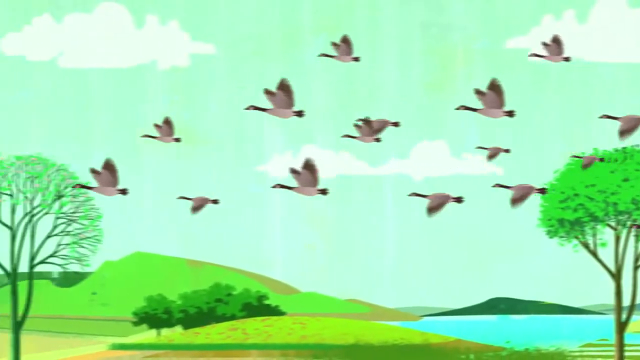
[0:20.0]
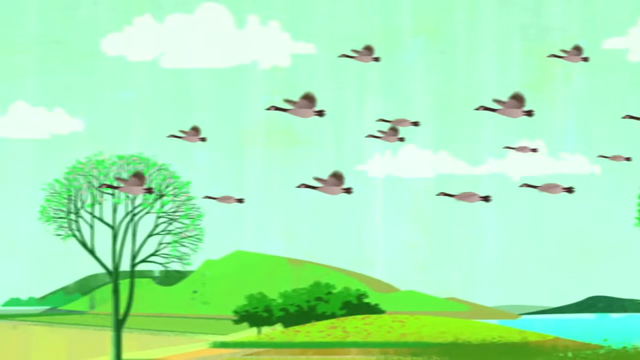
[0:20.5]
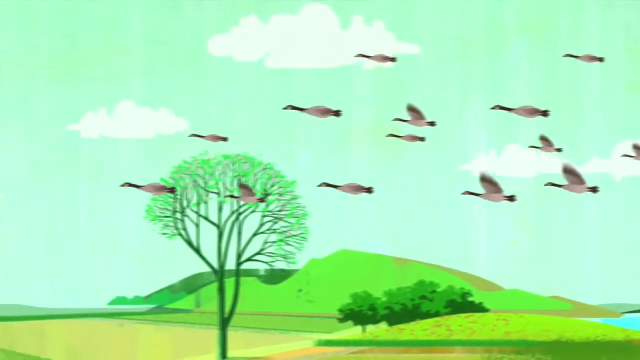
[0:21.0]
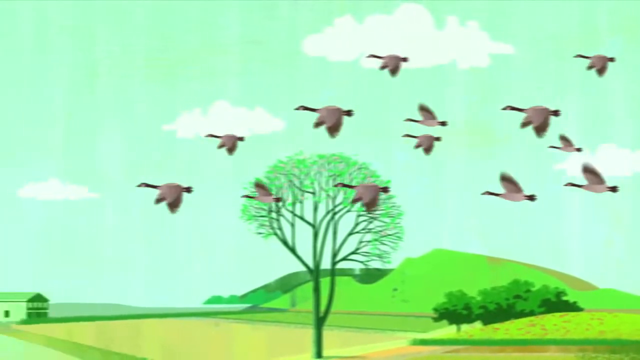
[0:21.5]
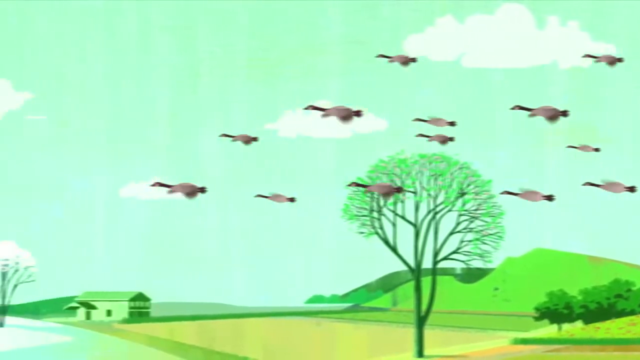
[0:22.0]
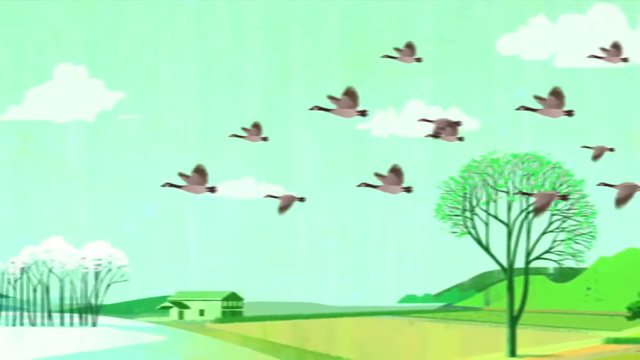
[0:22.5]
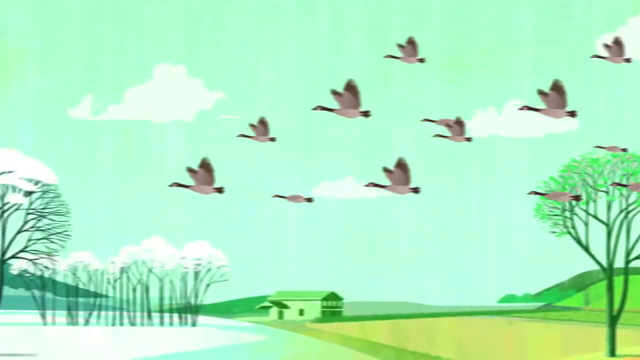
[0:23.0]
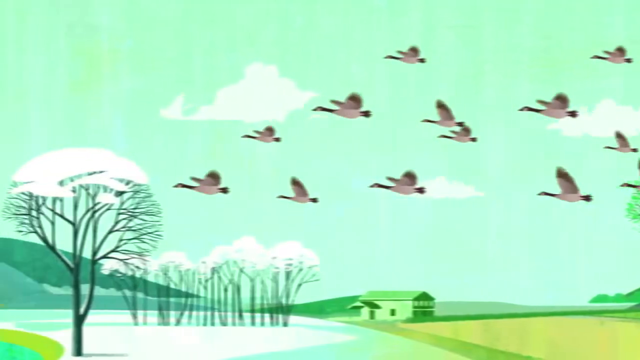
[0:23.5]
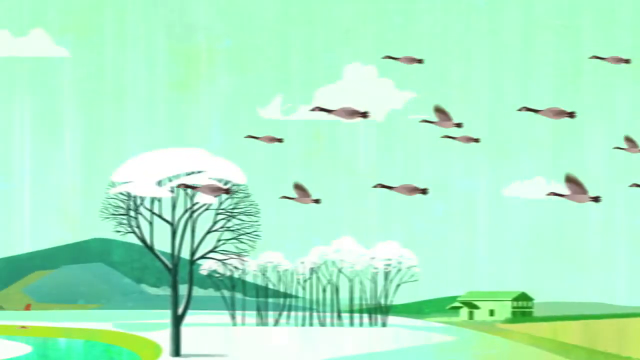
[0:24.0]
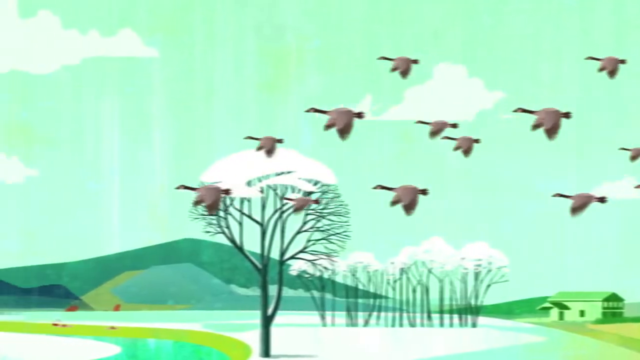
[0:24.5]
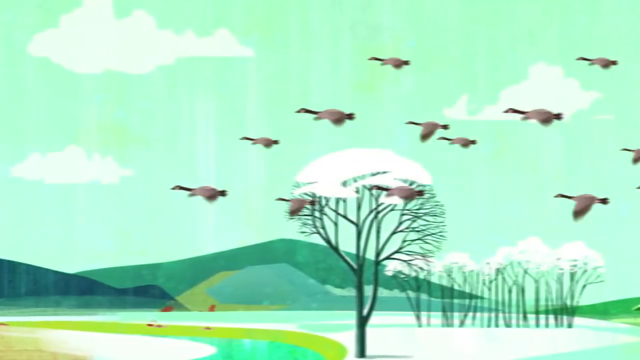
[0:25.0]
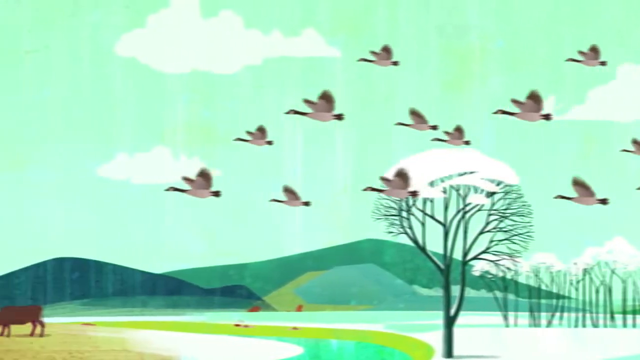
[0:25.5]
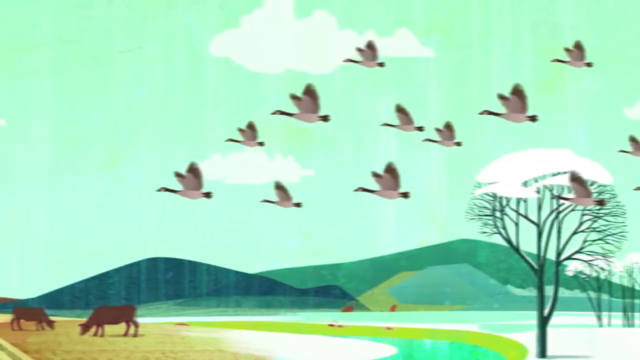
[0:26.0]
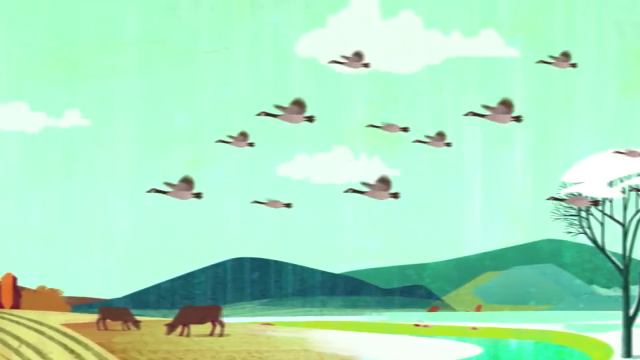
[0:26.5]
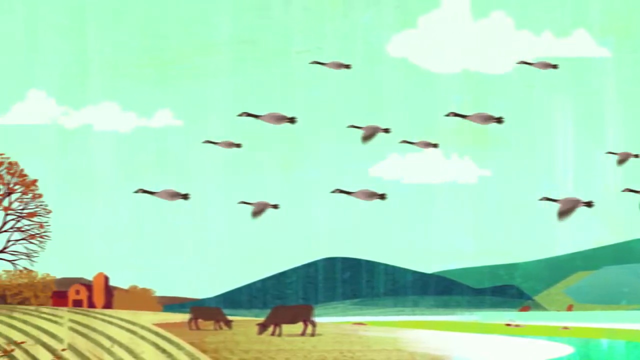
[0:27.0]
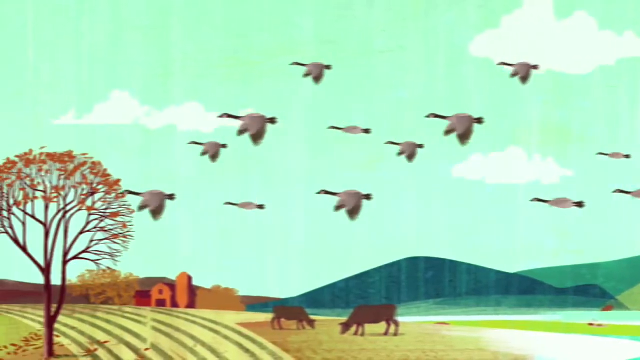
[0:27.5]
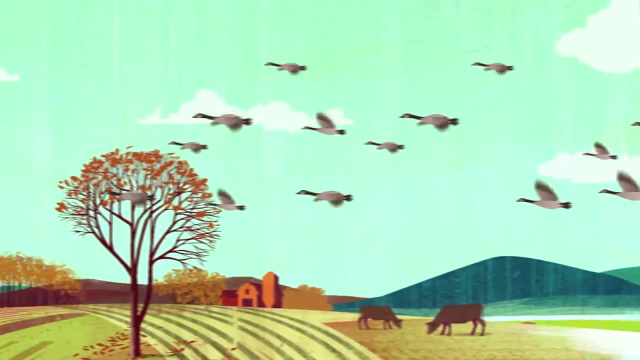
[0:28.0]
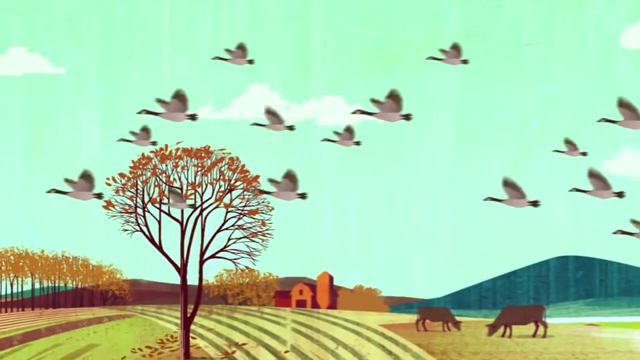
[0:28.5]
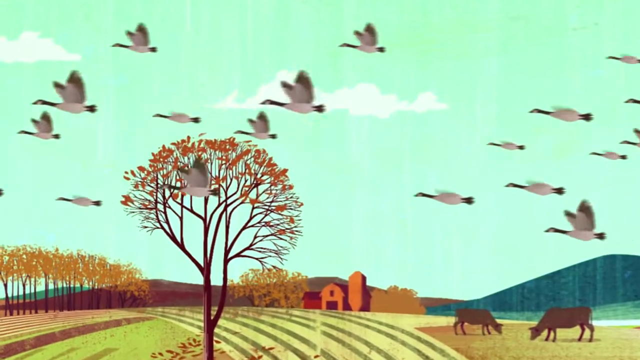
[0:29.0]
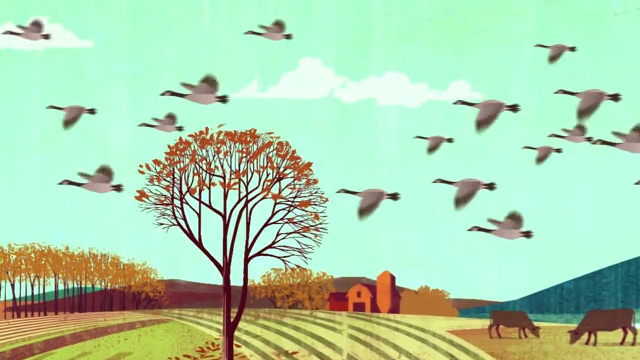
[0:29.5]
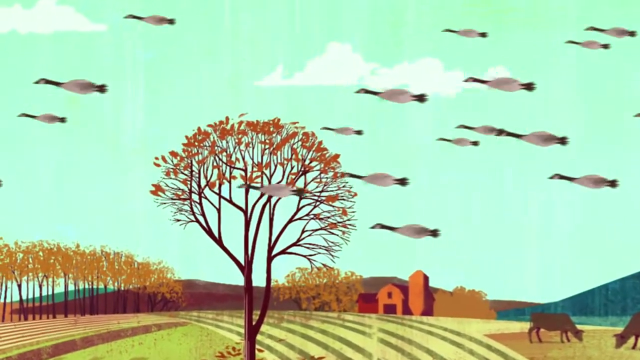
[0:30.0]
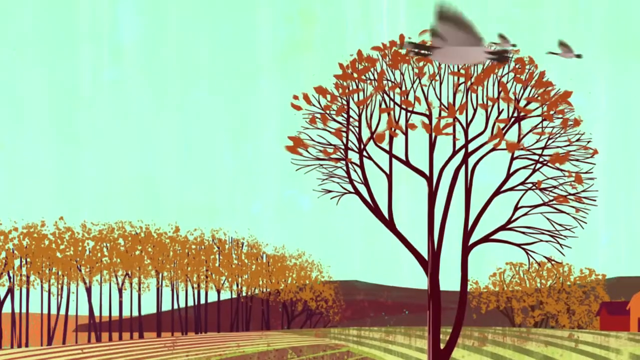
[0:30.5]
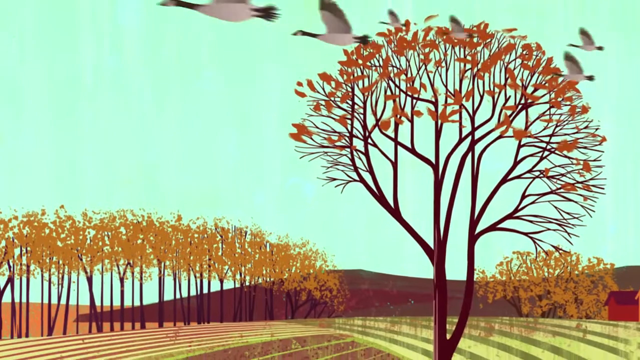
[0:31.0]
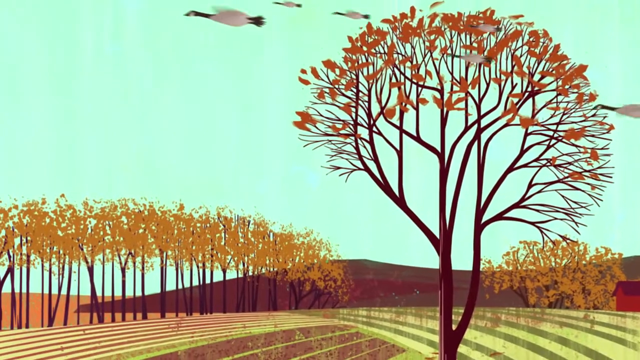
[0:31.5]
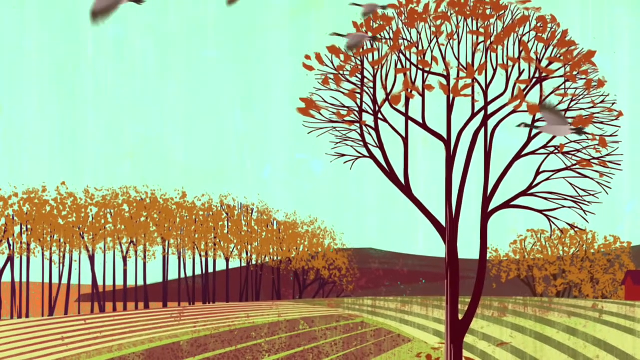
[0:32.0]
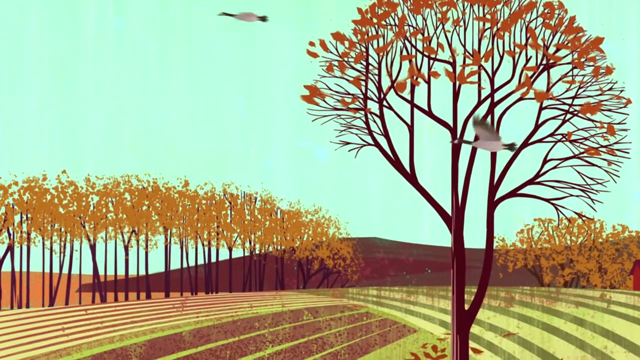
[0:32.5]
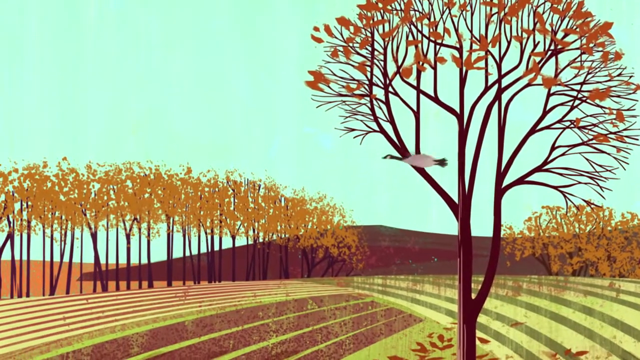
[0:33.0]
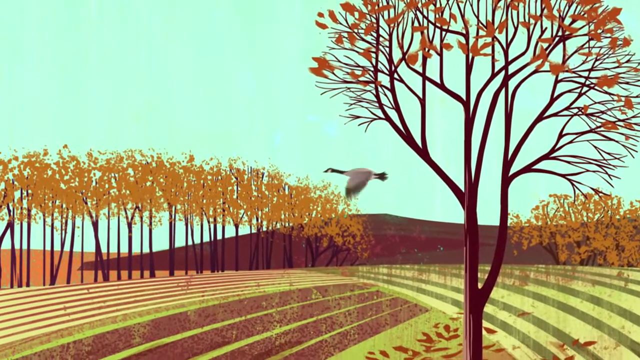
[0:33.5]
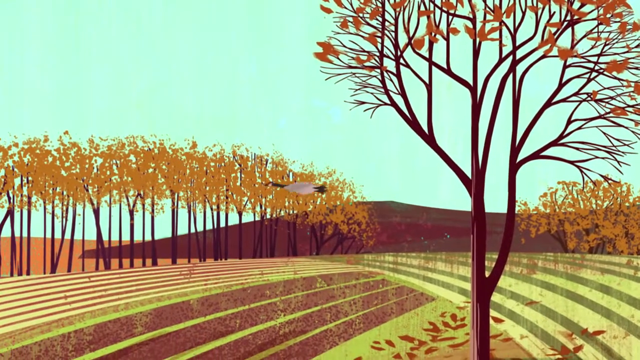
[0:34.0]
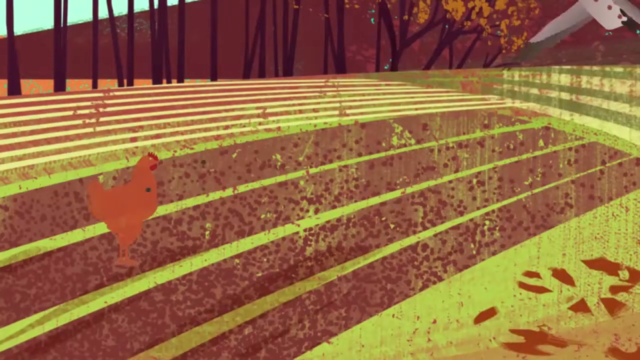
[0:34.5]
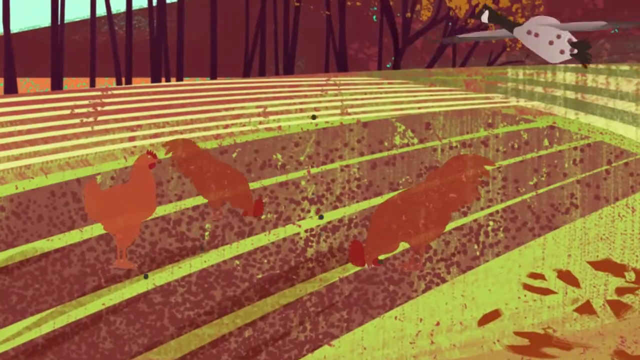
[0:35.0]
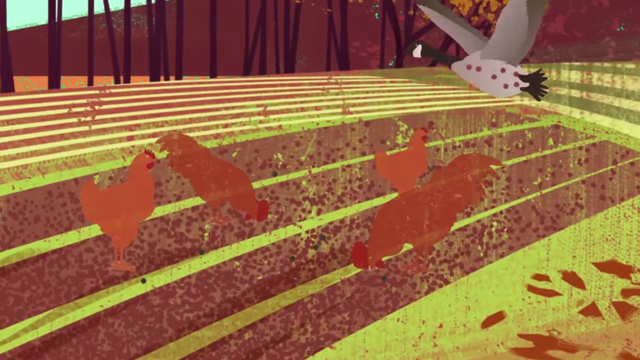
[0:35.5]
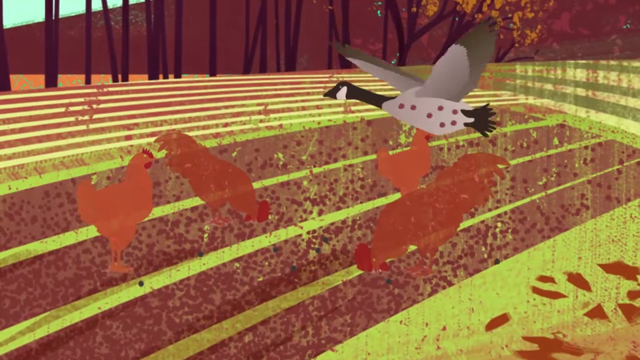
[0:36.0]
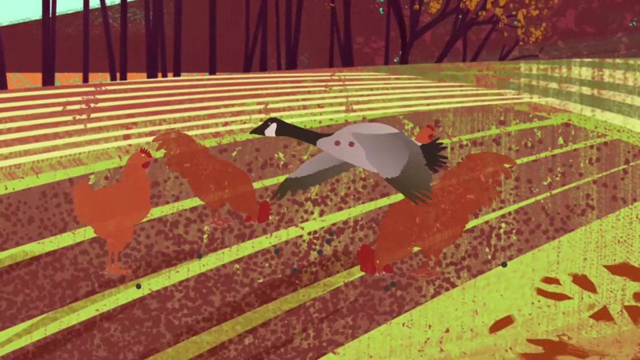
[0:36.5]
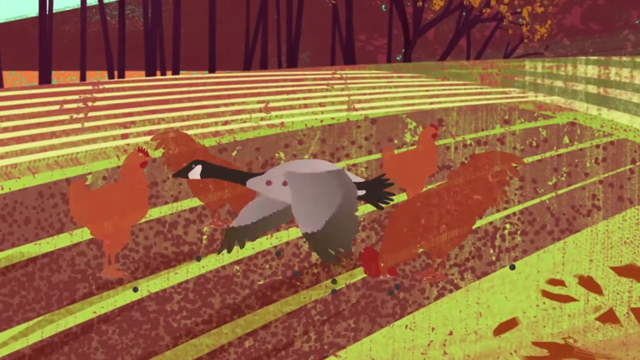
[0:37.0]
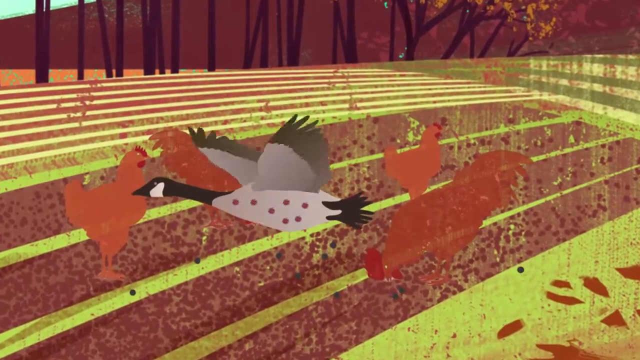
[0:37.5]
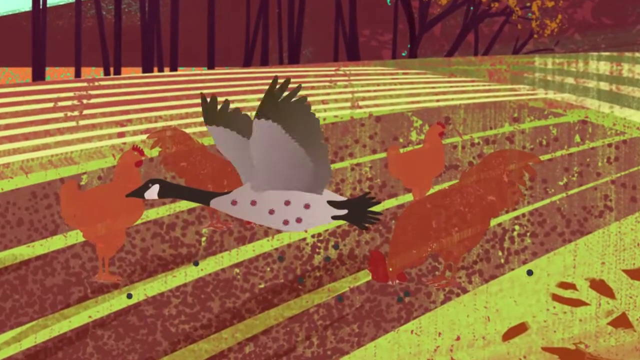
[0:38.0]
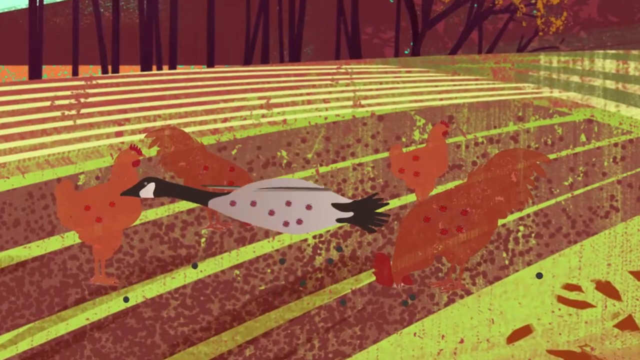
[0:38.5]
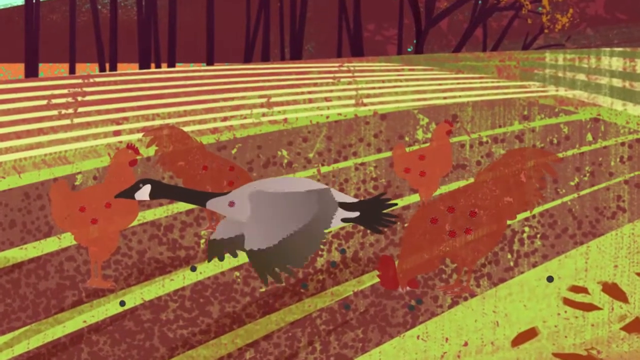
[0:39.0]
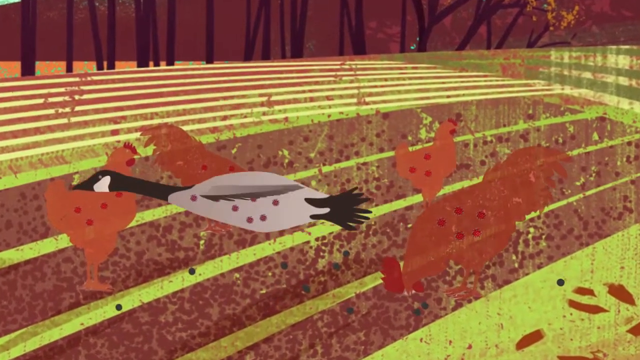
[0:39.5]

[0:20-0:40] A side view shows the geese flying in a V formation, passing over what appear to be trees in the background. The sky has greenish and bluish hues, with very cartoonish white clouds. Rolling hills in different shades of green are in the background. There is an orangish barn, and it almost looks like fall, with an orangish tree whose leaves are falling. Three yellow trees are in the background, and the geese fly past two brown cows. Rows and rows of crops are shown as light green and dark green stripes. One of the geese flies low and appears to be pooping on roosters in the field, laying down feces before continuing to fly off. The roosters appear to be kind of grazing along the crops.